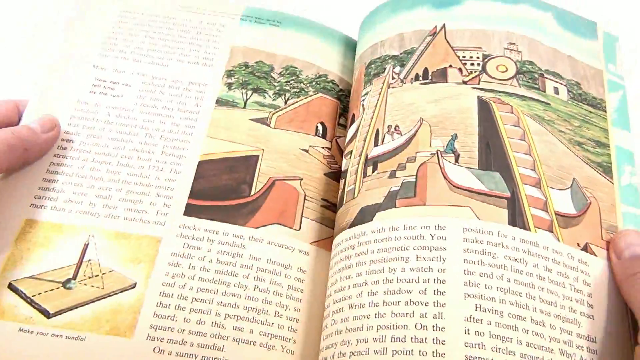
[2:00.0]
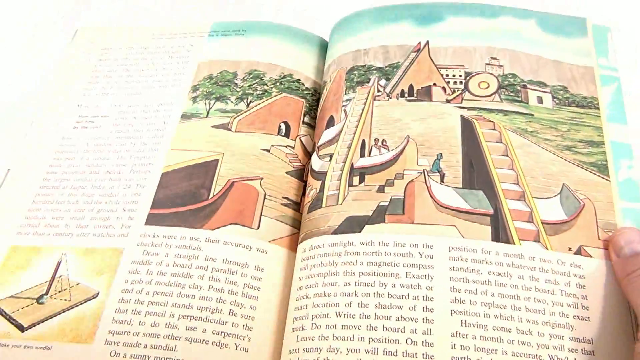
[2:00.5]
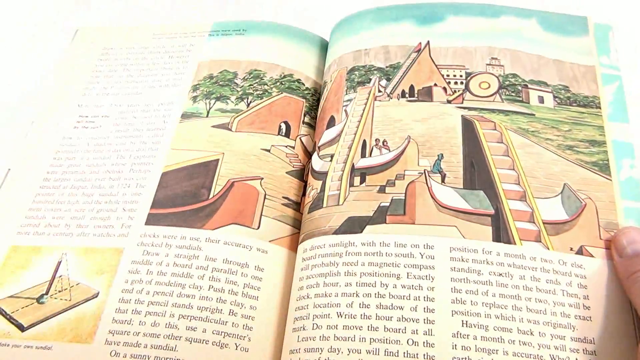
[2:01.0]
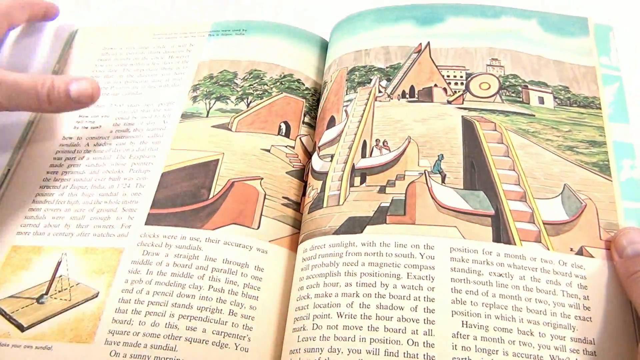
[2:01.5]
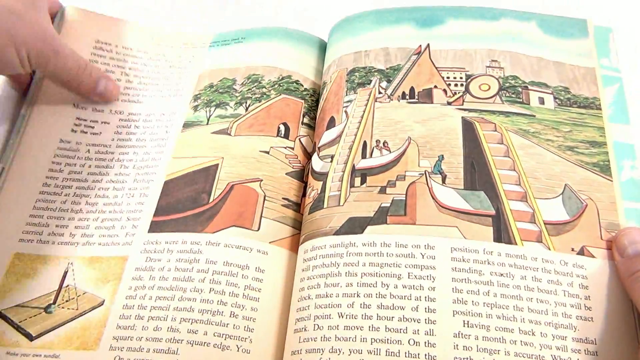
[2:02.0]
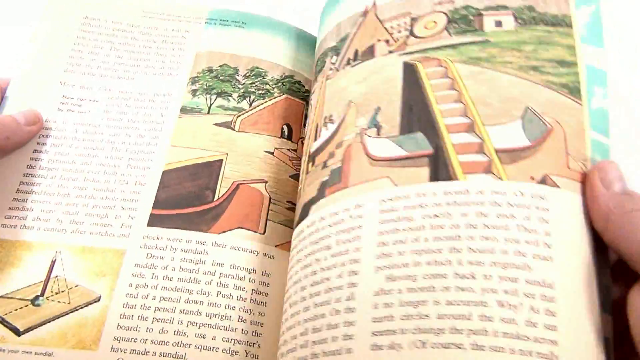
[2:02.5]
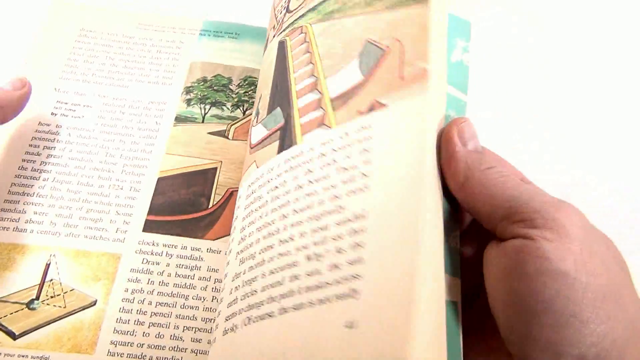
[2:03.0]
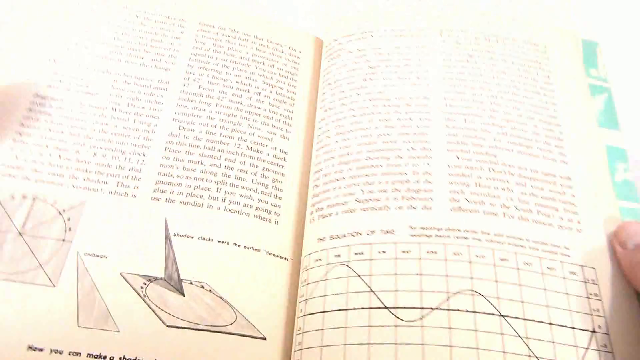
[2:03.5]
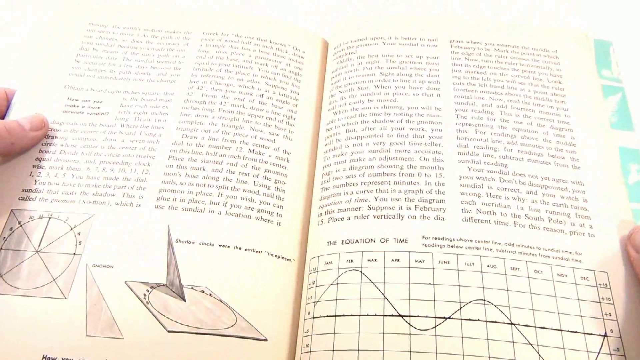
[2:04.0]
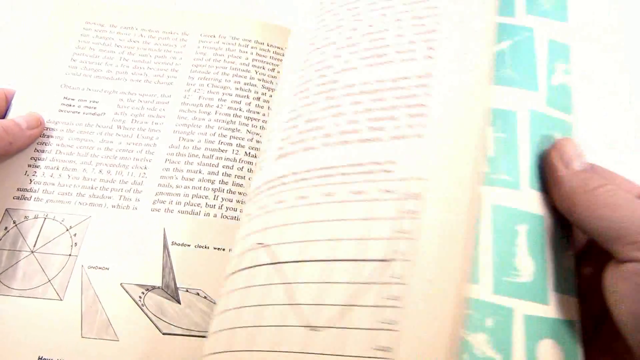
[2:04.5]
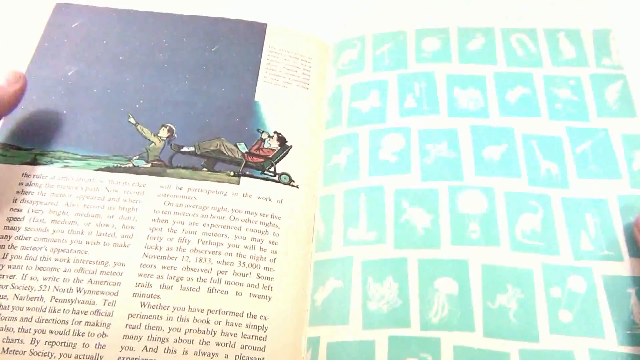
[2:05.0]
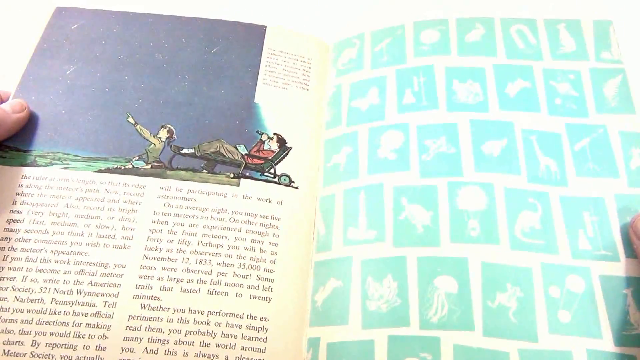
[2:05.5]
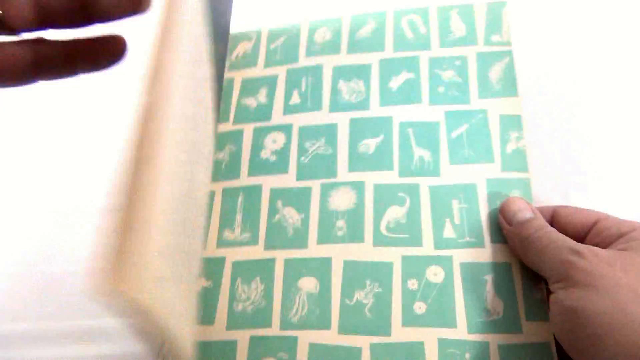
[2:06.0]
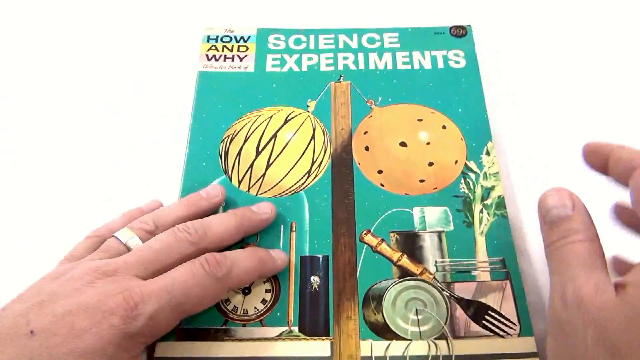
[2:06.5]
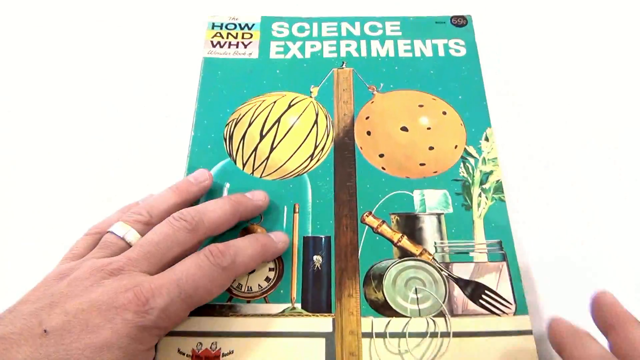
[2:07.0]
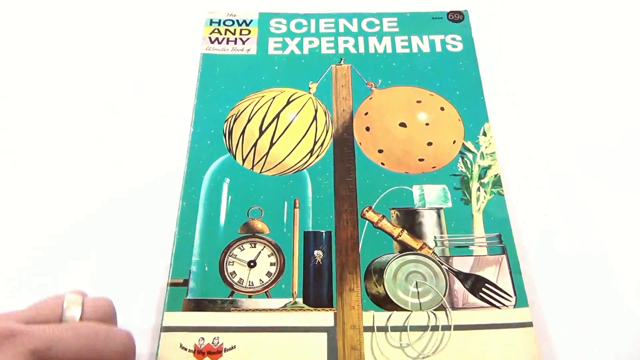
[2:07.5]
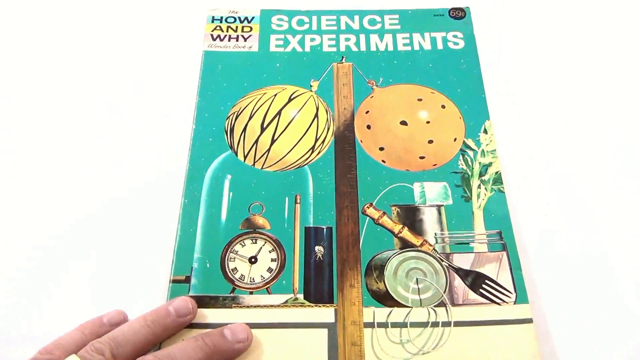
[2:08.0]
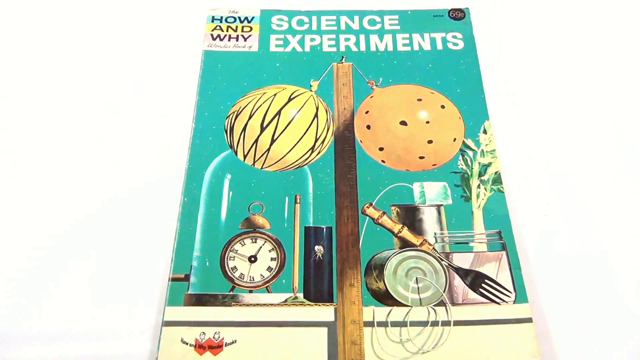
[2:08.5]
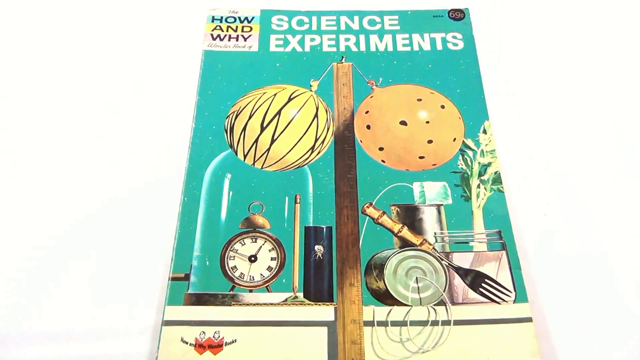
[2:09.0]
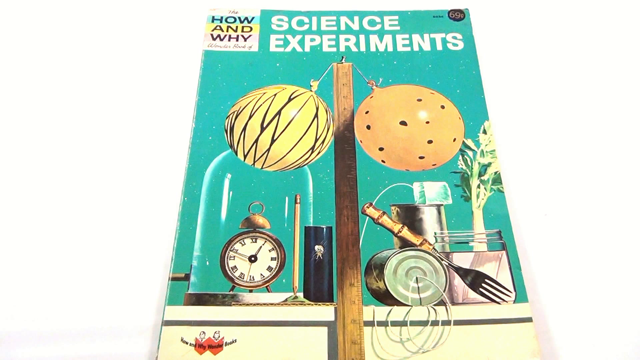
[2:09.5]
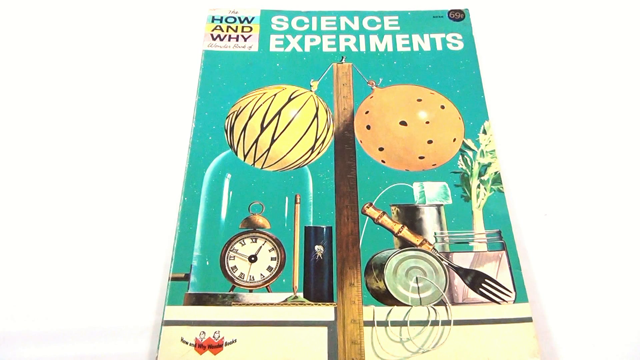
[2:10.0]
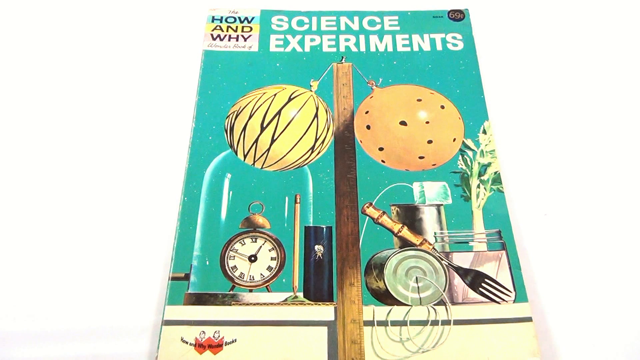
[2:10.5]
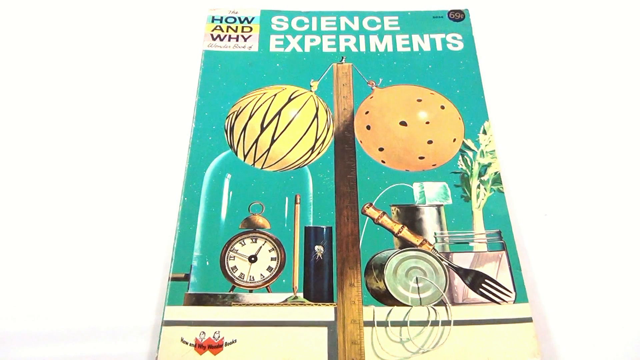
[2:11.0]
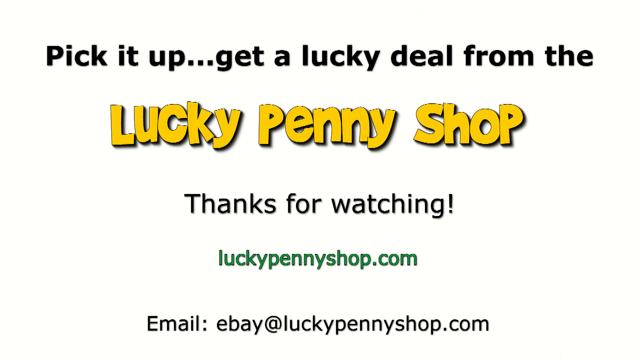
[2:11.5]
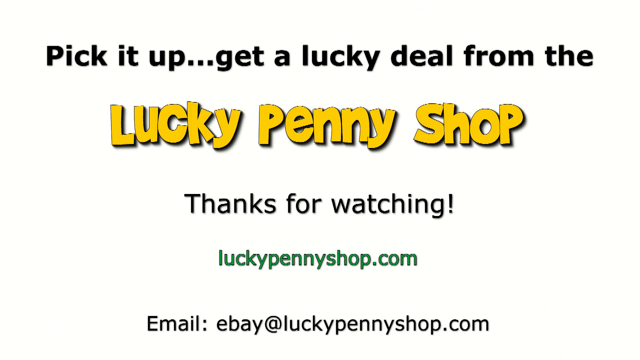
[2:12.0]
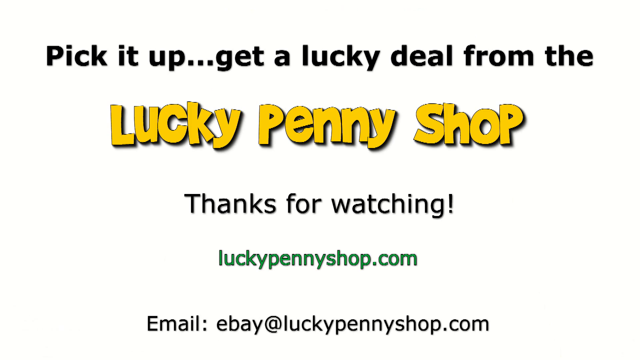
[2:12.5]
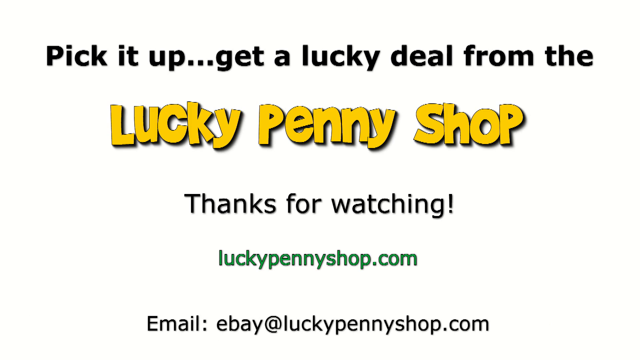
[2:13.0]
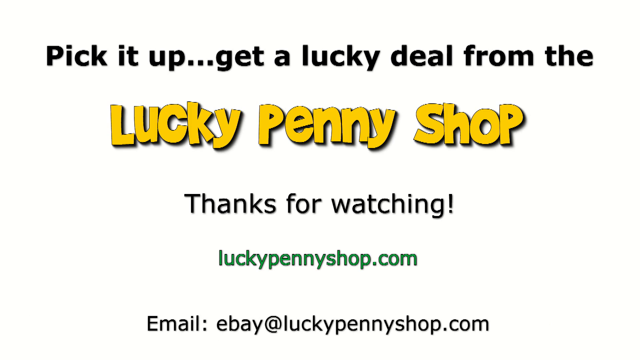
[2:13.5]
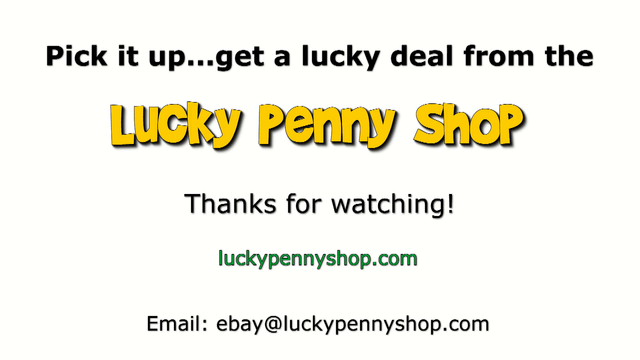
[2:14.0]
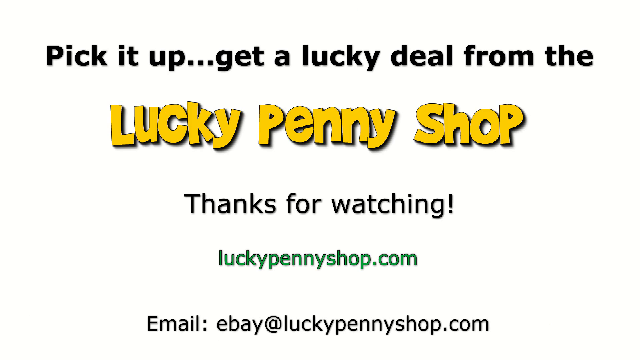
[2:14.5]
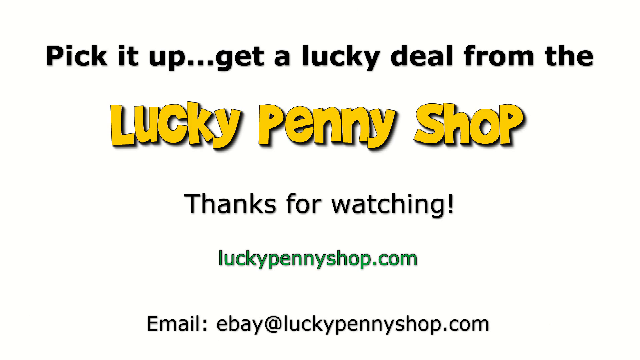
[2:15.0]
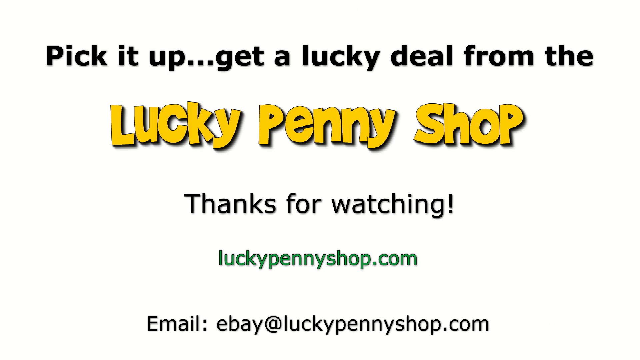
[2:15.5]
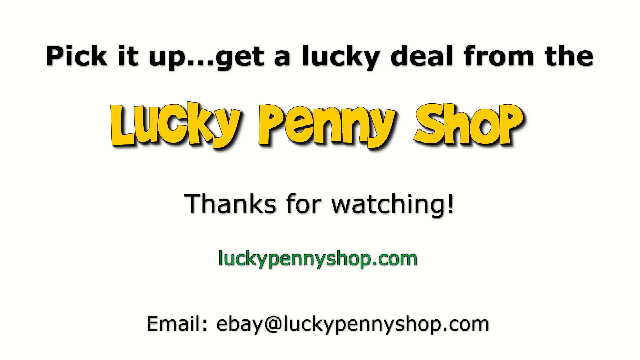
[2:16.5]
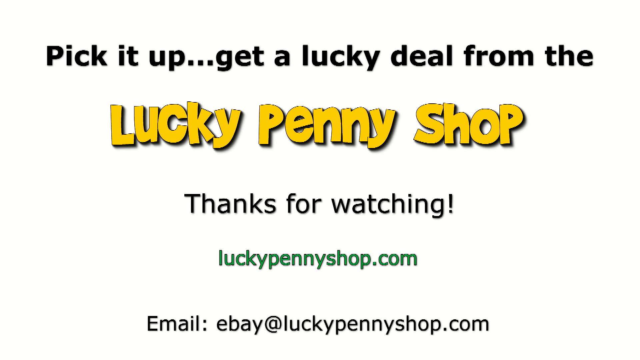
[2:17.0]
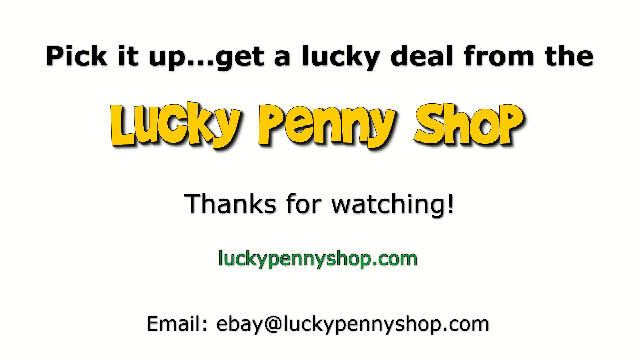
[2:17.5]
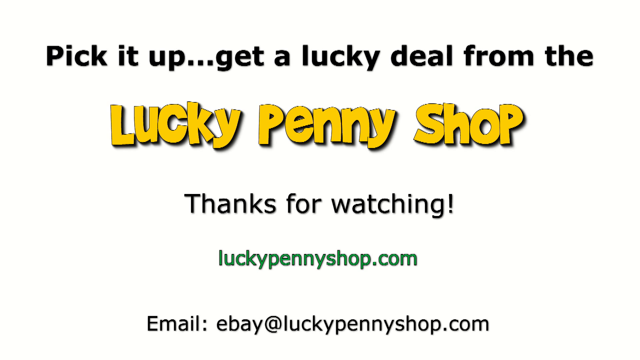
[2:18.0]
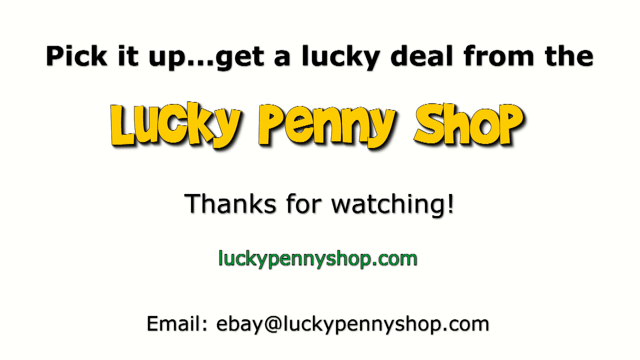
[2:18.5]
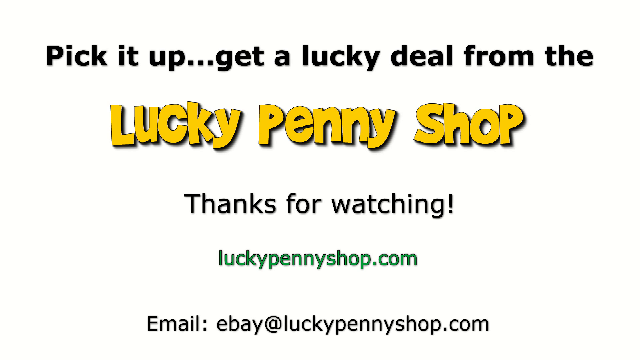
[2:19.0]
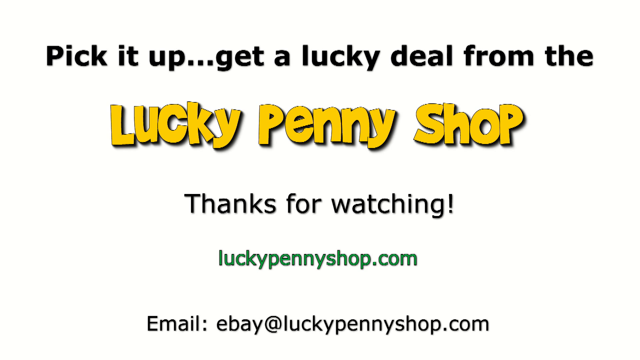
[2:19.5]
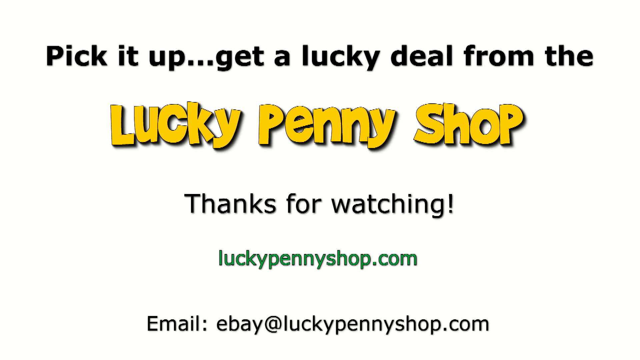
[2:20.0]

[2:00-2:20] Two hands that appear to be a white person's hold the pamphlet open. The left page has lots of writing and at least parts of two pictures. One picture has a gold glow around it and some type of instrument with a flat surface and something in the center pointing up, almost like a piece of wood with another piece sticking straight up from the center. The next picture, with writing to its left and under it, takes up part of the left page, part of the right page and the whole top of the right page; it appears to show a village with houses, steps leading up to part of the village, small trees, a green grassy area and what appear to be a few people climbing the steps. The person opens the page wide, flips to the left twice and closes the book, showing "science experiments" and the picture with two balloons on the cover. An end screen reads "pick it up, get a lucky deal, lucky penny shop. Thanks for watching." and gives a website and an email address.